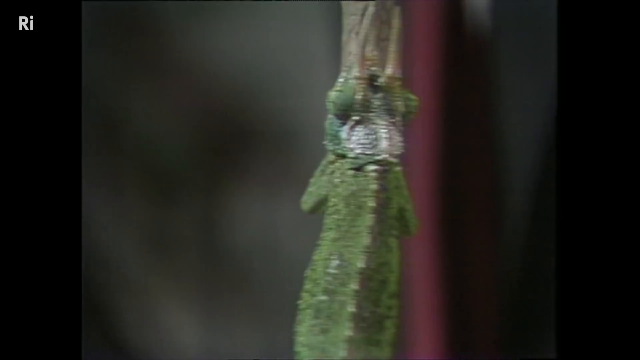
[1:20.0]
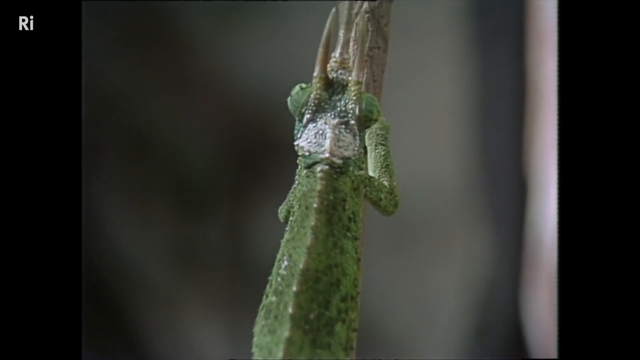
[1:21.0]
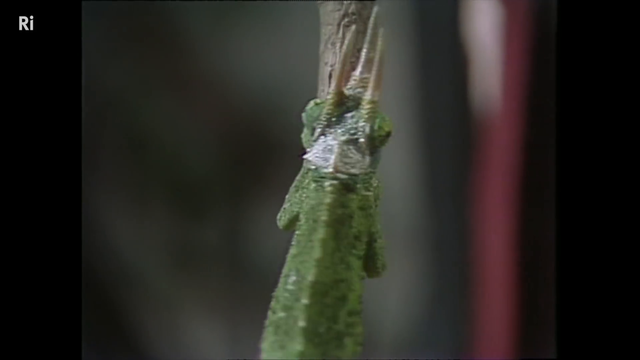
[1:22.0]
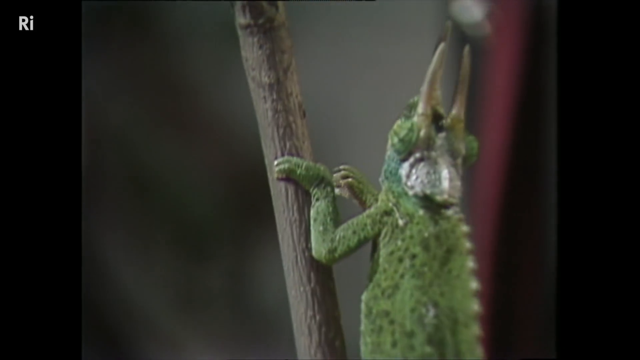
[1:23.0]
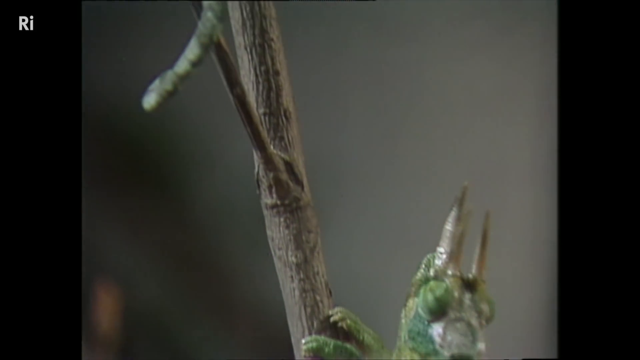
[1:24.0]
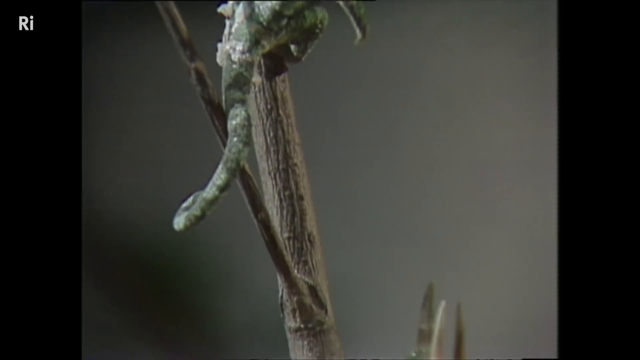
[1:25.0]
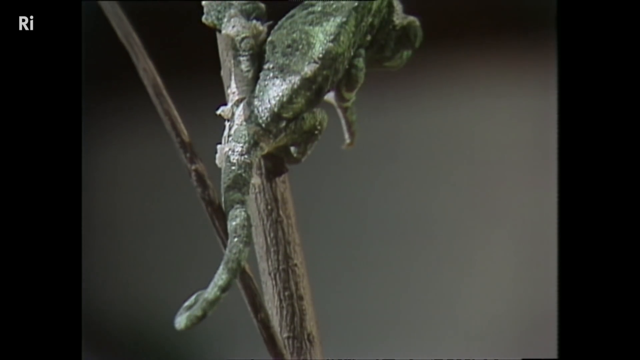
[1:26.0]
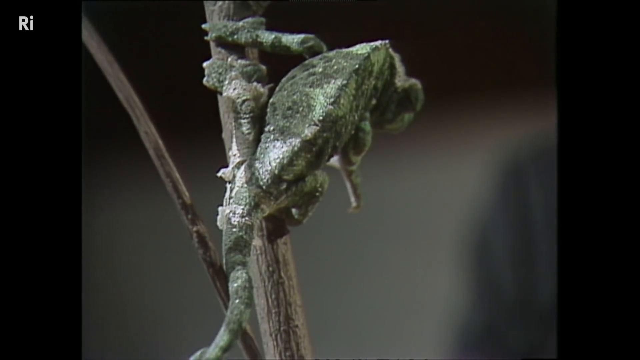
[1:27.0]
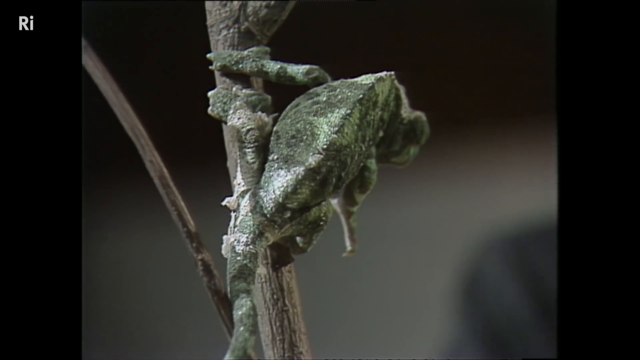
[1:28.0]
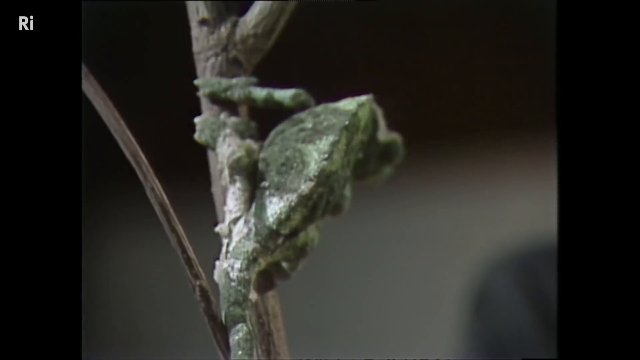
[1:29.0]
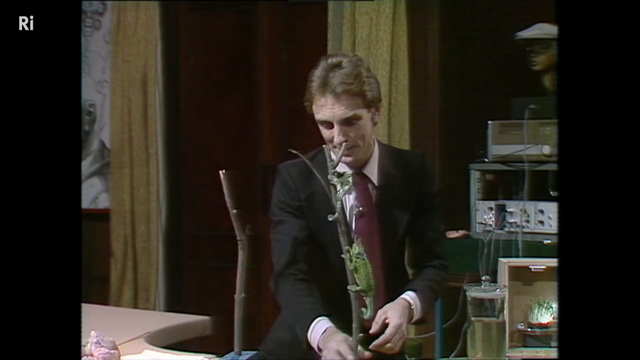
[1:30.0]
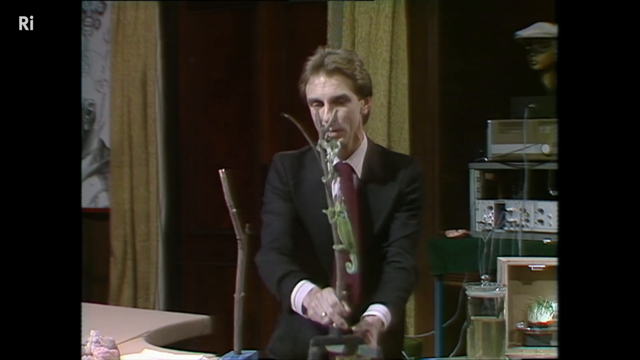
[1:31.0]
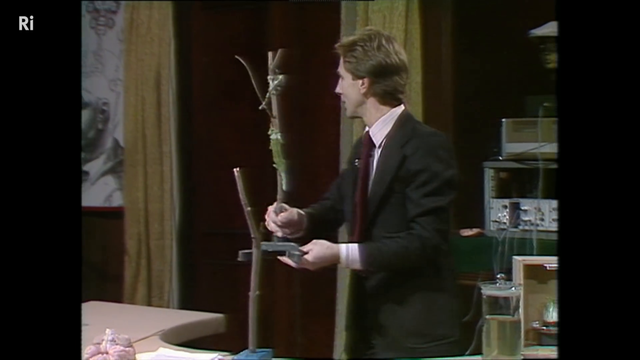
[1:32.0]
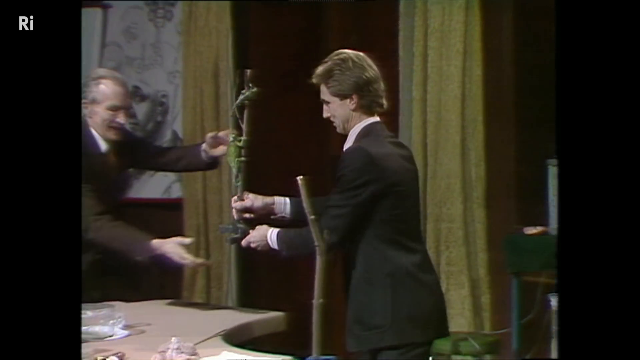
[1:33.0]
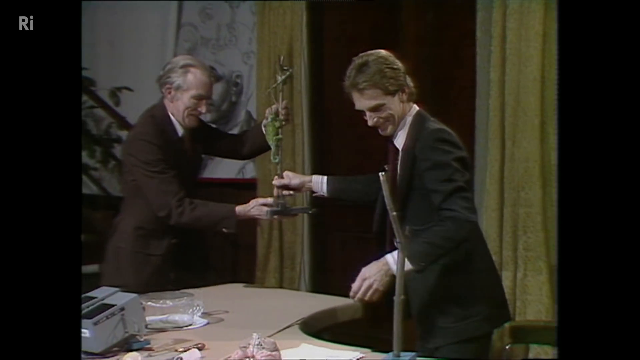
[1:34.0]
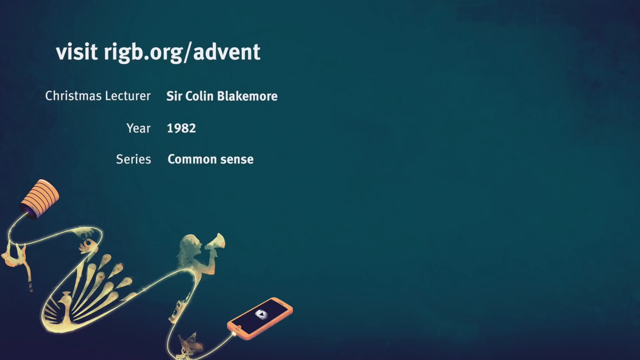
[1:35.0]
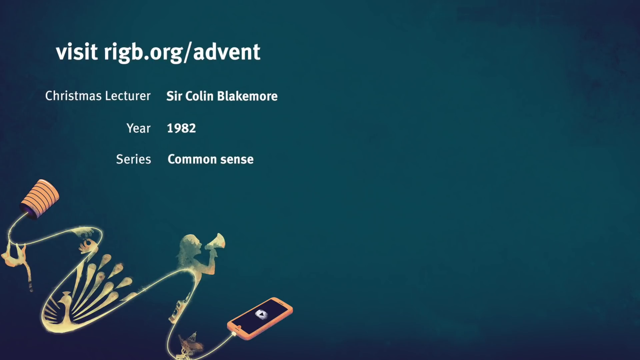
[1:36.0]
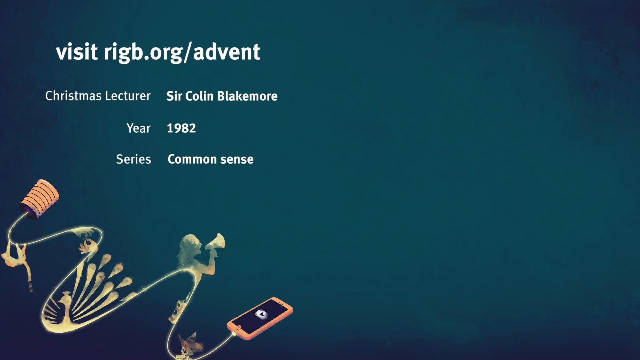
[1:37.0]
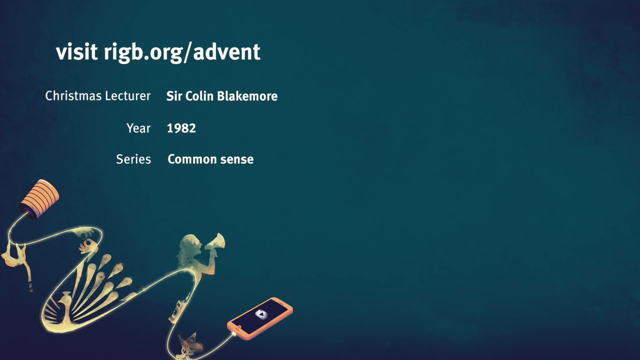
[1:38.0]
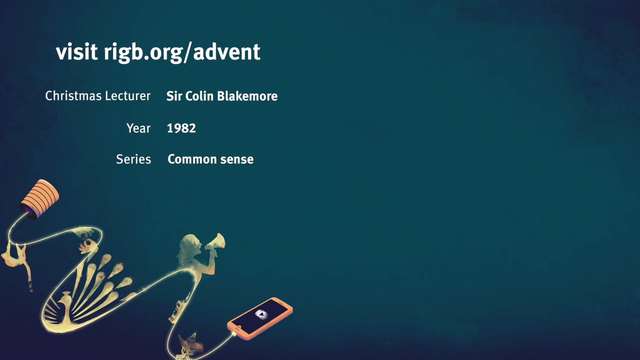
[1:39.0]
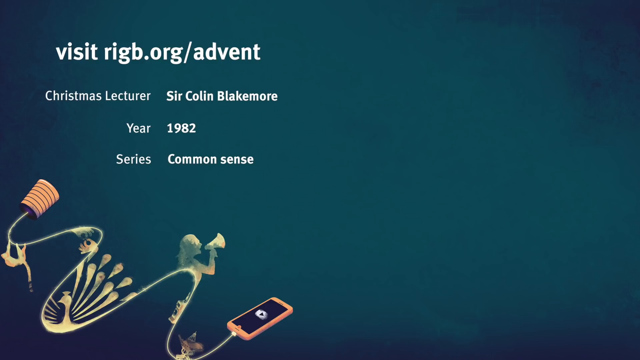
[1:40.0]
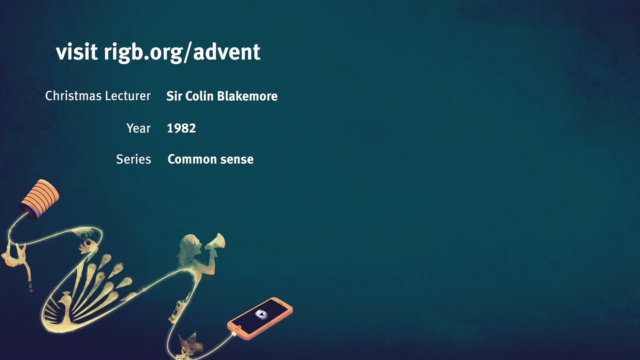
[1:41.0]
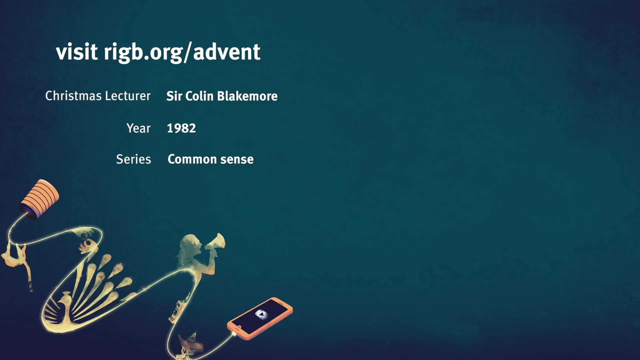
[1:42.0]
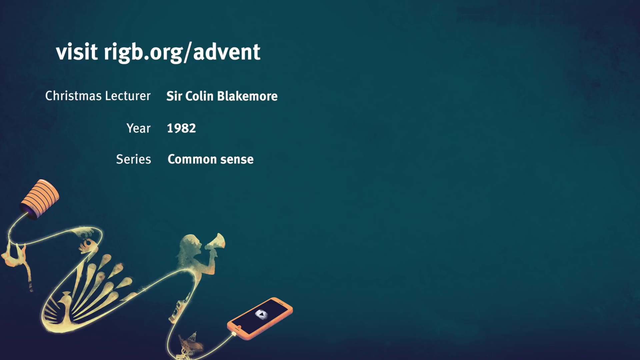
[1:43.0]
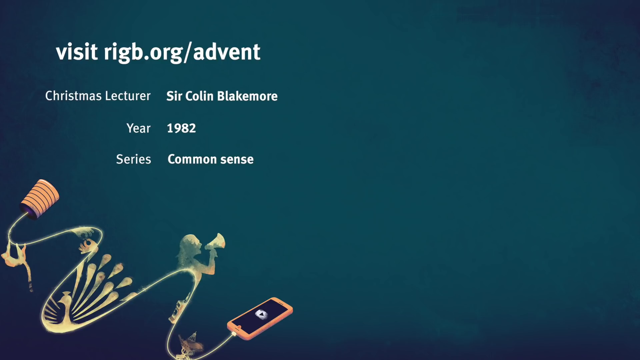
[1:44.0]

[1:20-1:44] An up-close, top-angle shot shows an iguana on a stick, its top torso visible, with the background blurred to bring focus to the stick and the iguana. The man in a black suit is partially visible in the background, very blurred. The camera pans up slowly to show another iguana on the stick slightly above the first, remaining zoomed in. The man in the suit picks up the stick, which moves out of focus and blurs. The scene transitions to the man's room or workshop, where he picks up the stick with both iguanas and gives them to another man in a brown suit.